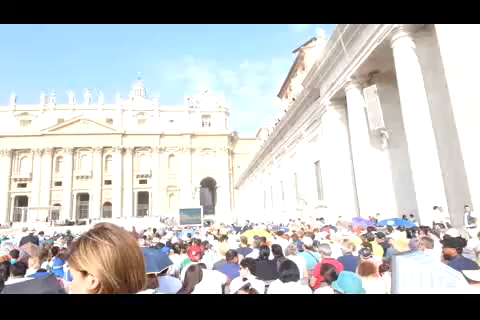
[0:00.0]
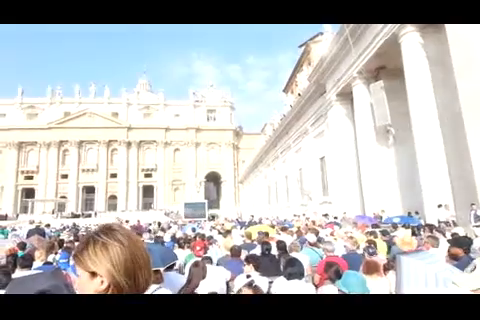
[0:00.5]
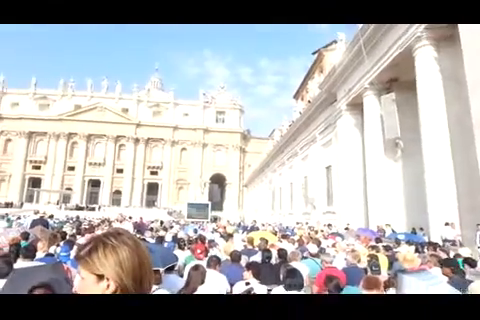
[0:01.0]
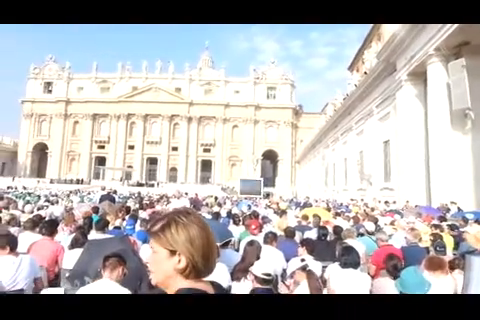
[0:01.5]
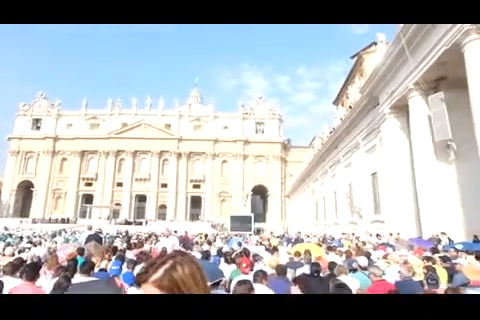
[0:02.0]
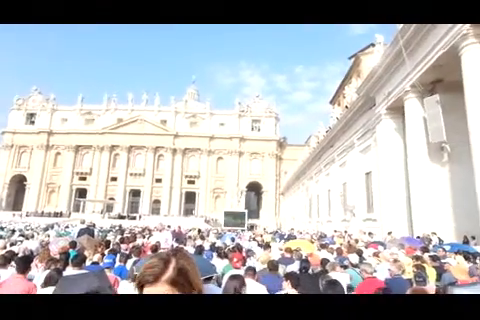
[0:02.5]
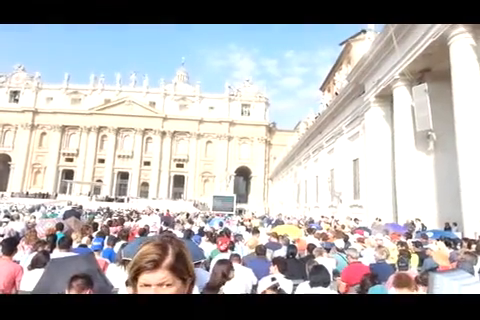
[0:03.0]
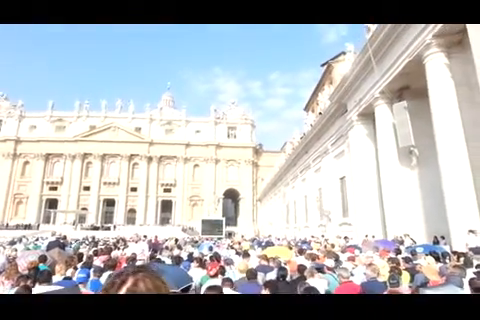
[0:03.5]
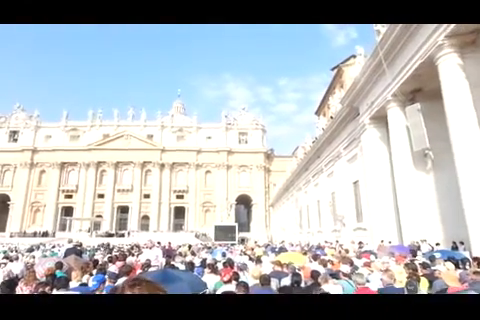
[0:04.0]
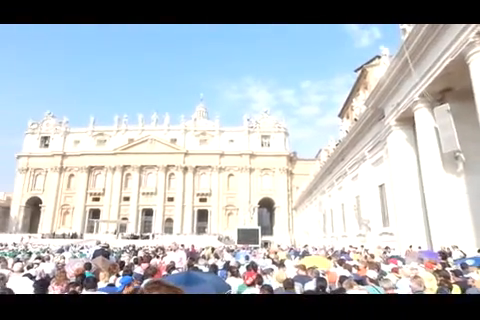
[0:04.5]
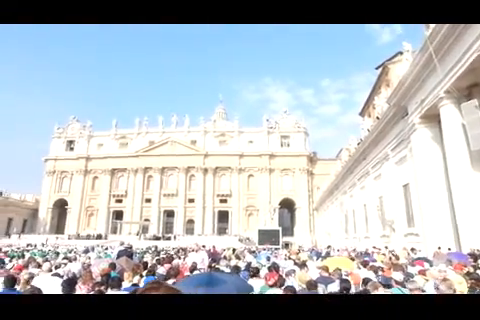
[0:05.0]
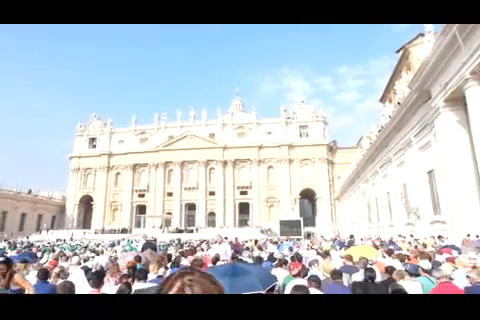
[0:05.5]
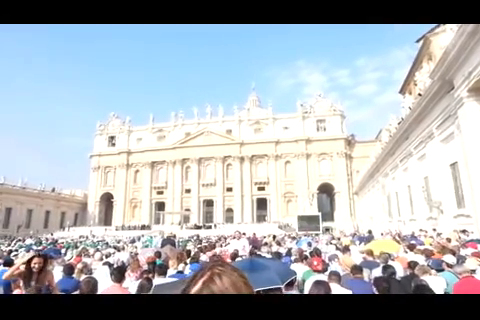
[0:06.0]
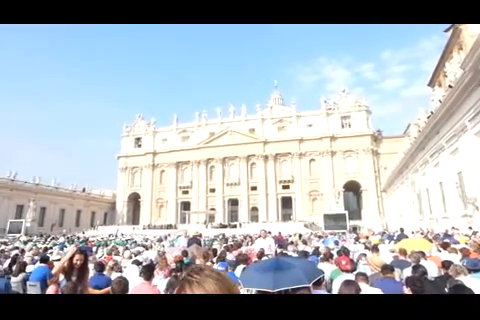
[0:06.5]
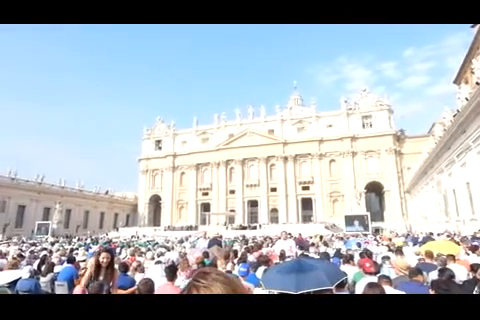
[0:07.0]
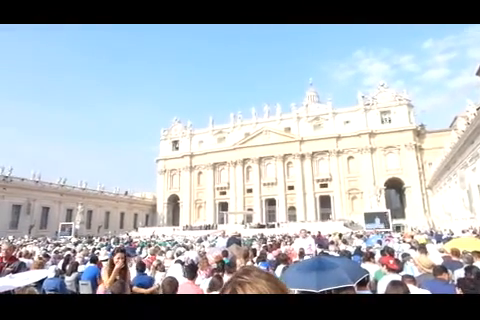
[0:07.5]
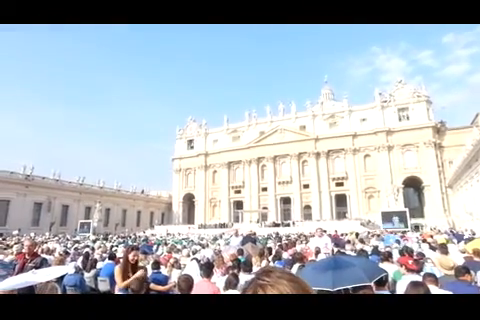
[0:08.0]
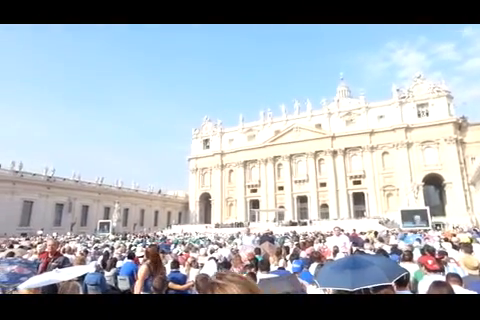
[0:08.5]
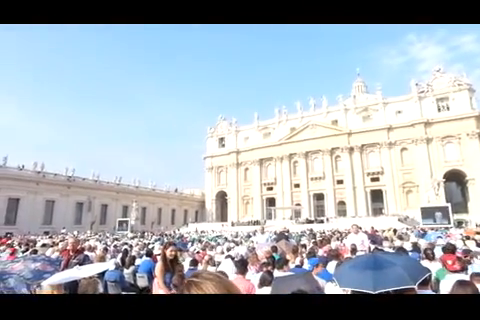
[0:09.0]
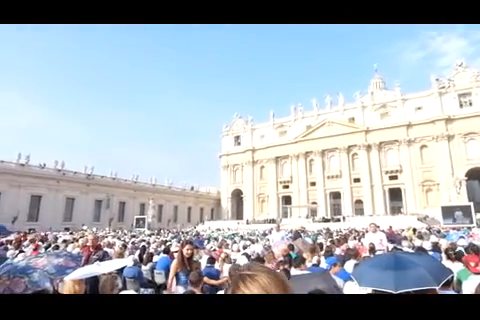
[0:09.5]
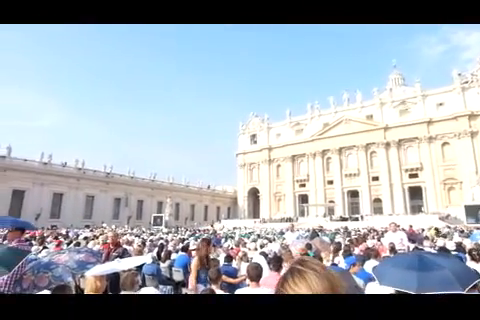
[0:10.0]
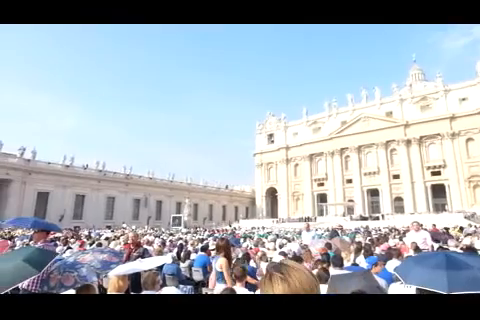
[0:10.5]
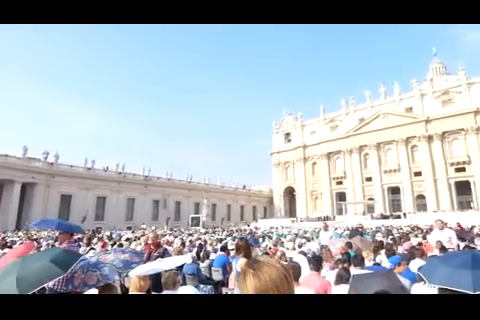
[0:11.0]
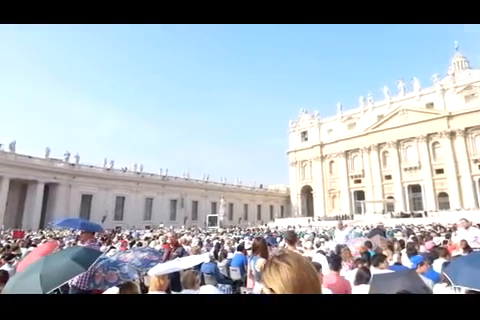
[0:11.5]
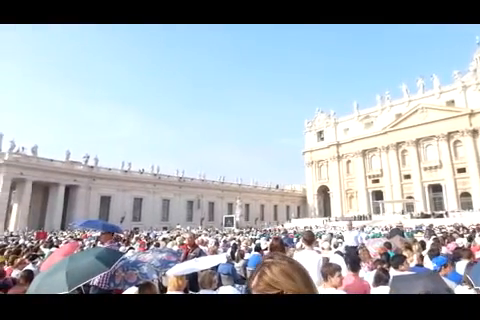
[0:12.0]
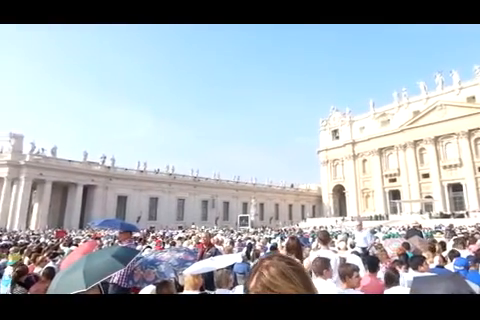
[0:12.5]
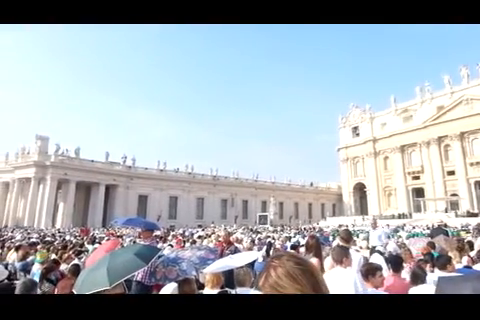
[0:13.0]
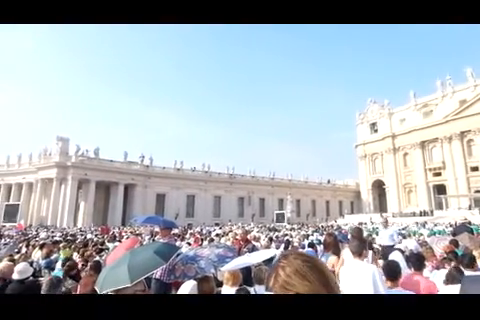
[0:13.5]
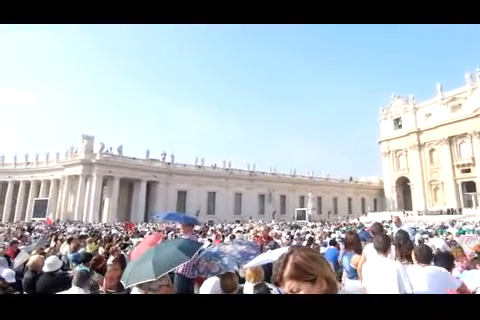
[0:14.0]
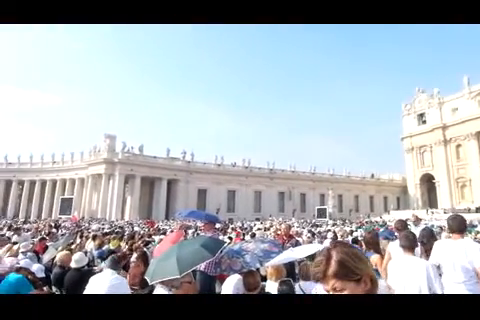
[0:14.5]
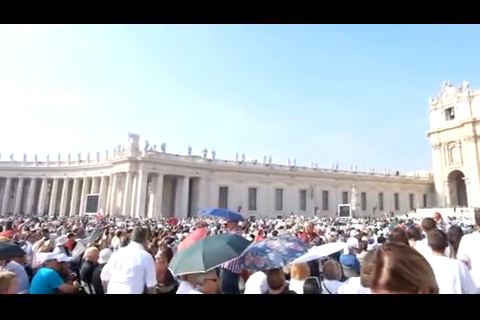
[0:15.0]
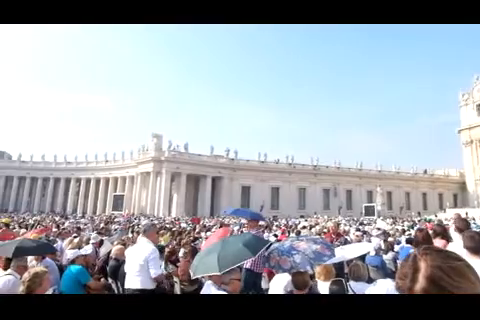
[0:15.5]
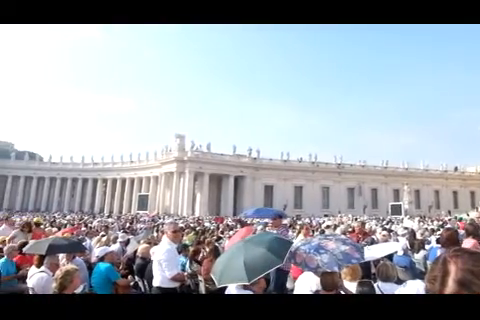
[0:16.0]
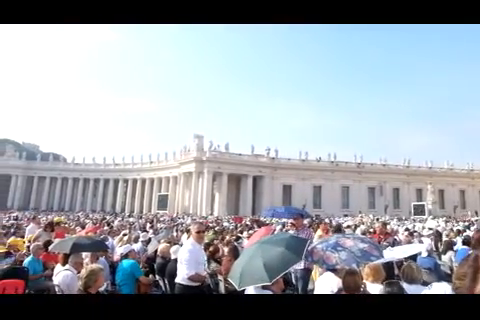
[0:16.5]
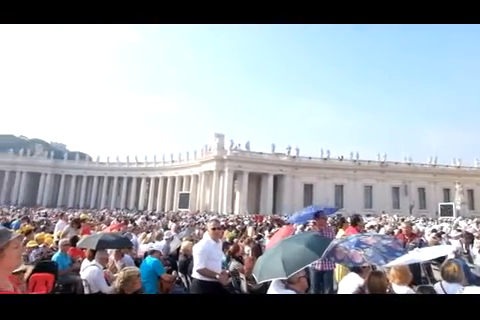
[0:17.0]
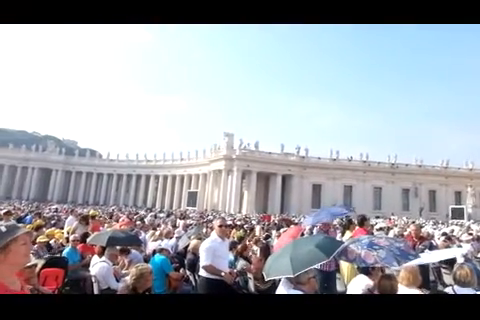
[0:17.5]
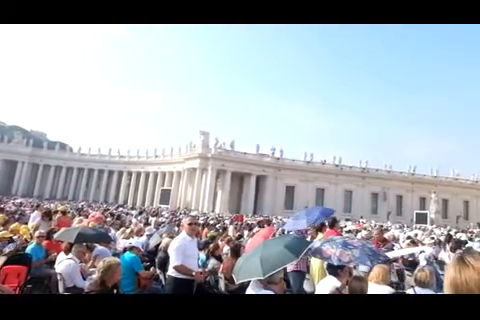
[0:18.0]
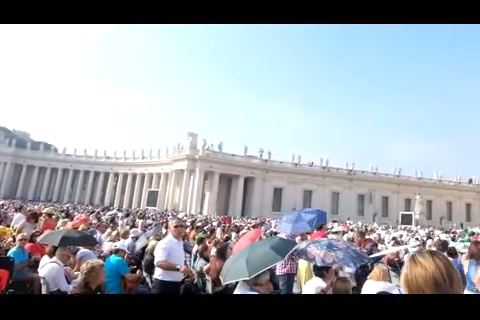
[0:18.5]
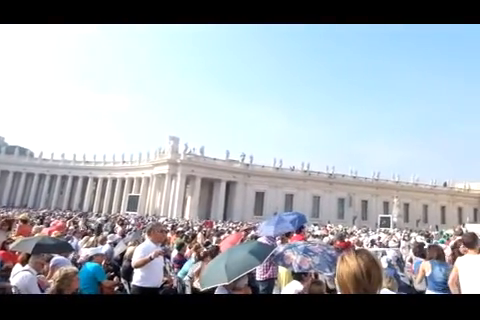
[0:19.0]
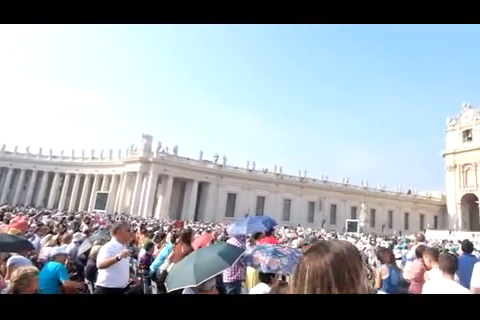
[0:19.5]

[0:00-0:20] The video appears to show Rome, with what looks like the Catholic church there. It is a very big building, and a great many people are standing outside it. The weather is bright and sunny; some people hold umbrellas, and others use different things to cover their faces. The center of the building seems to be a square, with different sides of the building around it, and the building has lots of big, heavy pillars. The crowd includes white people and black people, many just standing, probably anticipating something; they may be people who travelled to Rome.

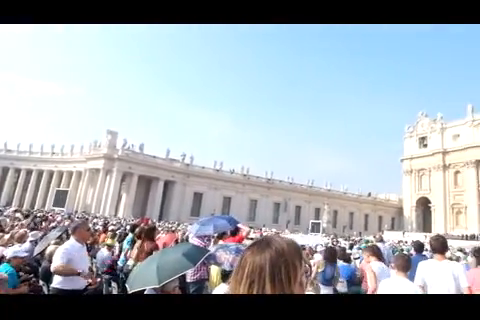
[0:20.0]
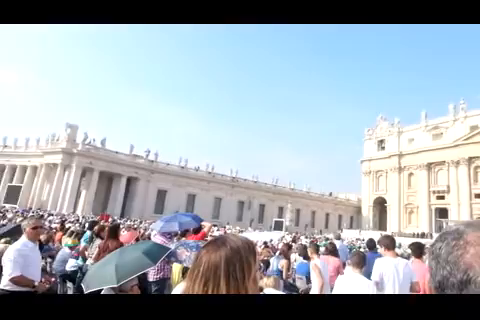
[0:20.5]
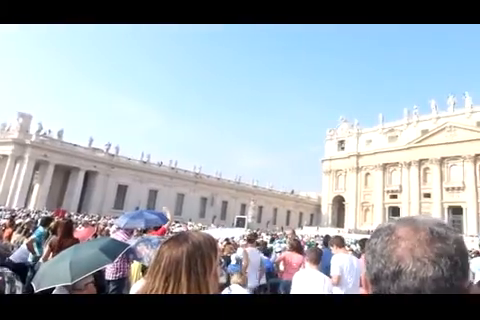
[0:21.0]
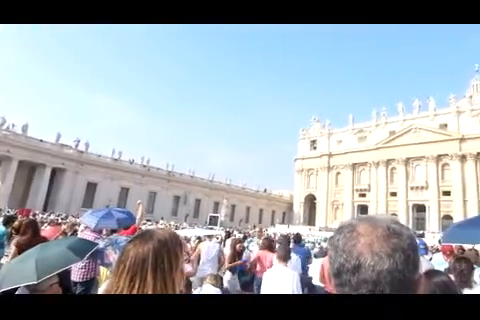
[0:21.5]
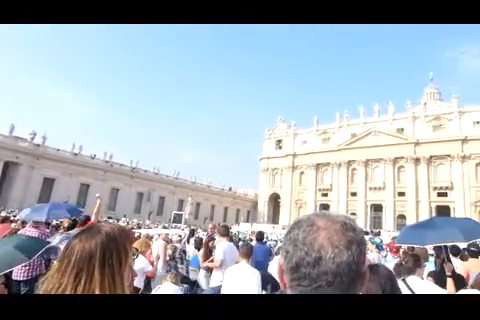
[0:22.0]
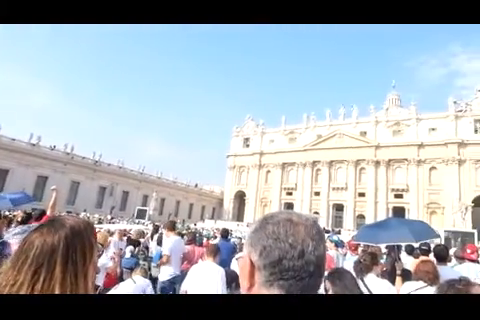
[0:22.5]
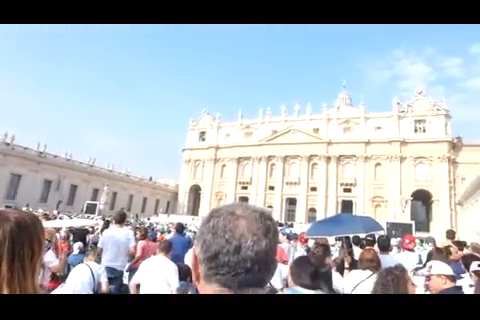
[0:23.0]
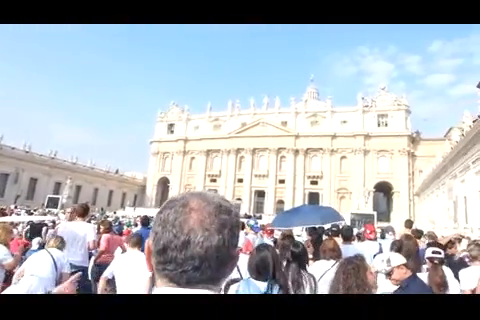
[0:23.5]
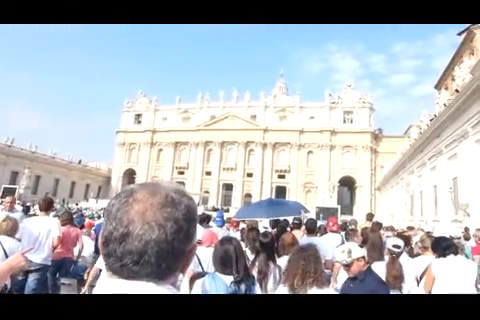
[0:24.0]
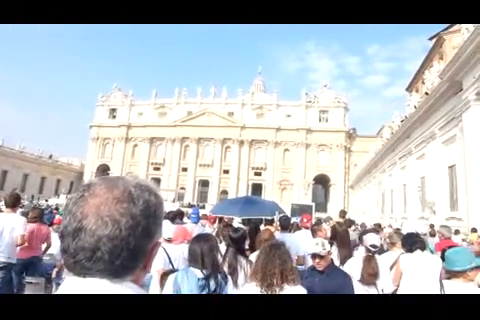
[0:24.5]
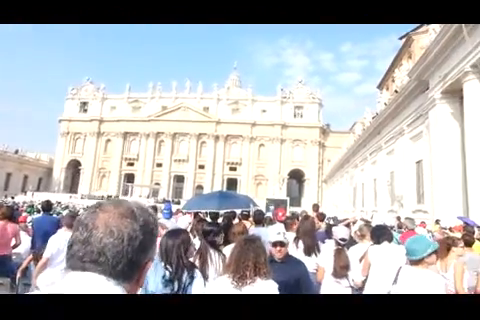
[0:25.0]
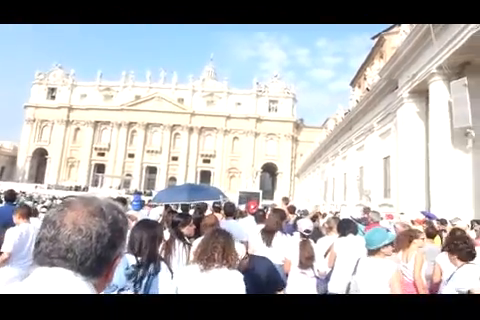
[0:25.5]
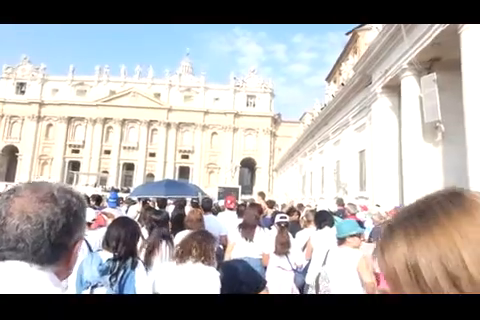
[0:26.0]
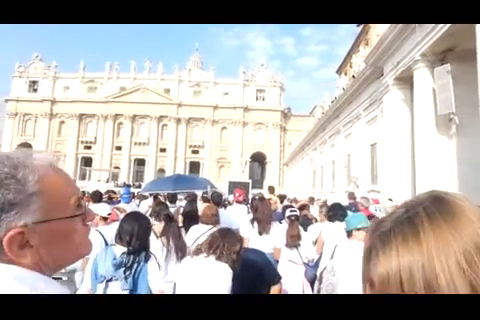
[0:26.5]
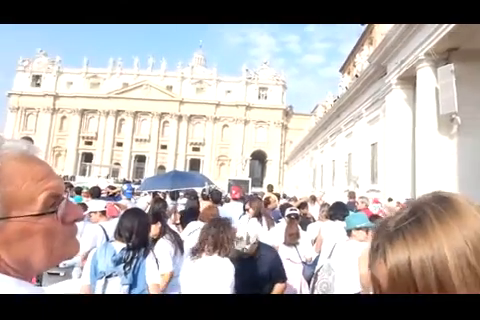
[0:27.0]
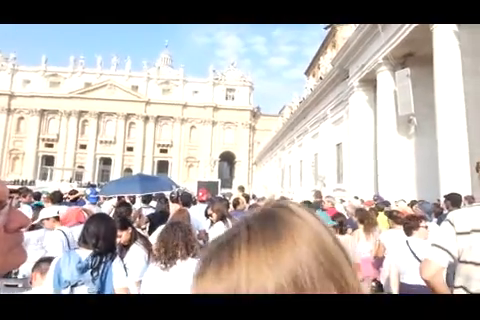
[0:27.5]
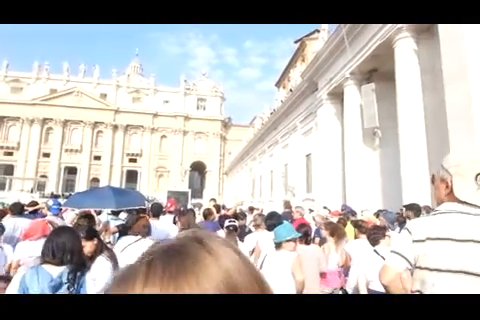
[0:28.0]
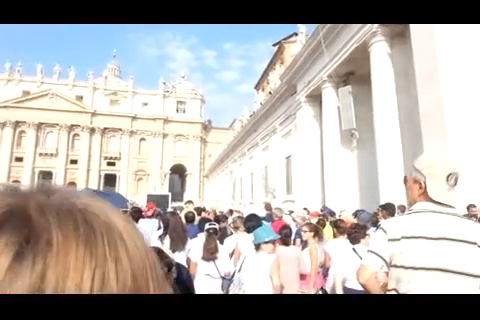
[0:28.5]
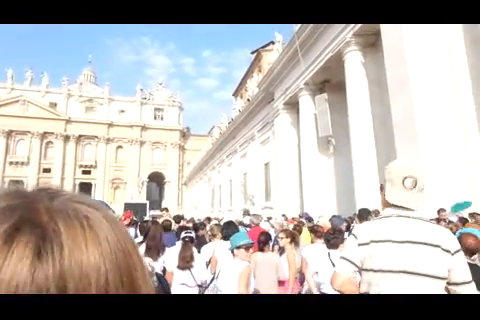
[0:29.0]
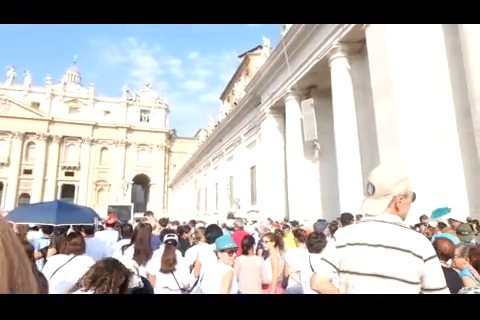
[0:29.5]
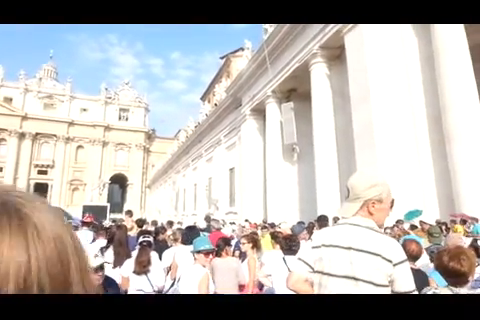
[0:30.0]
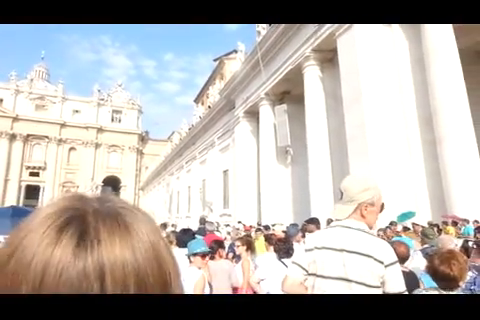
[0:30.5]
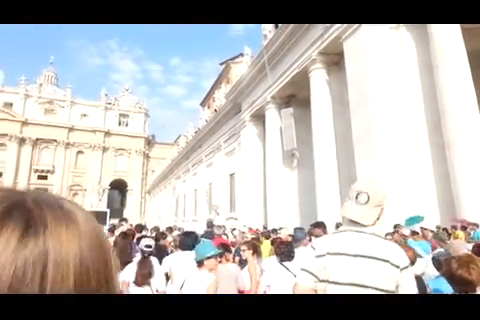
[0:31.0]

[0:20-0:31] Travellers are still in front of a building that looks like one in Rome. Many people stand outside, and many of them hold umbrellas. The place is very sunny and the weather is bright. The crowd includes people of different races and ethnic groups, though mostly white people. There is a crowd everywhere, with heads visible all over and too many people to count, possibly around a thousand.